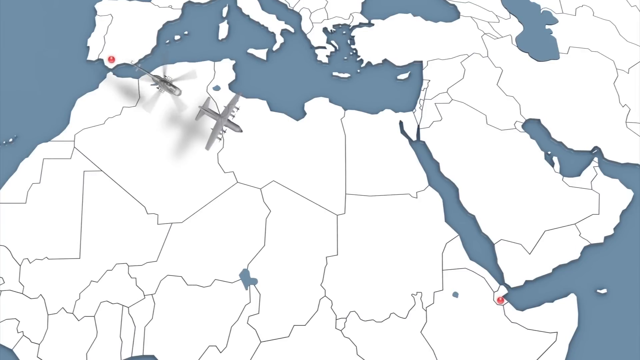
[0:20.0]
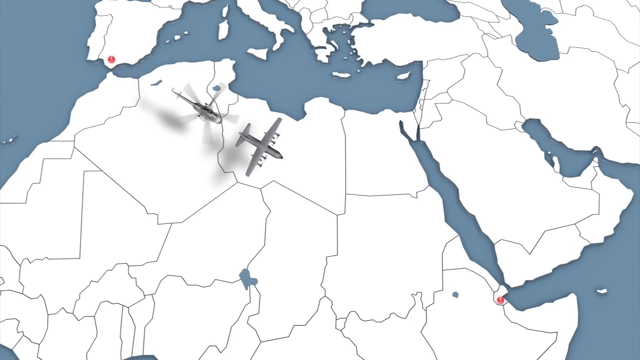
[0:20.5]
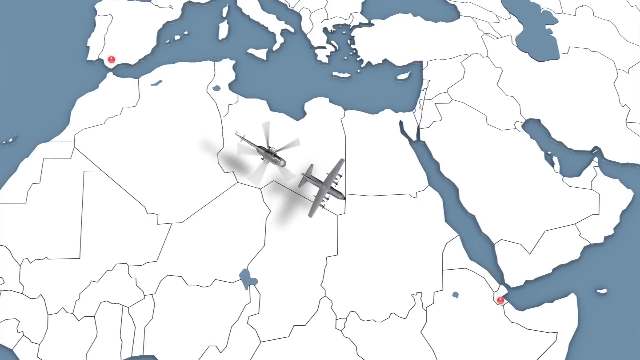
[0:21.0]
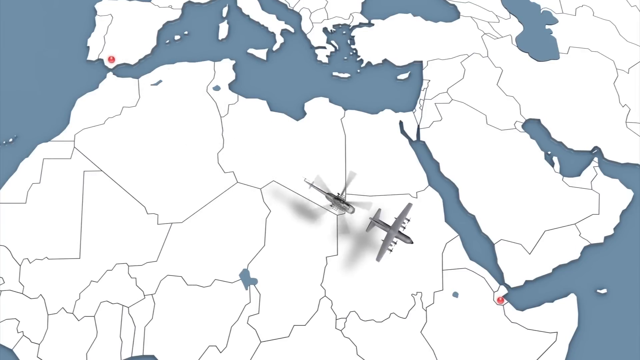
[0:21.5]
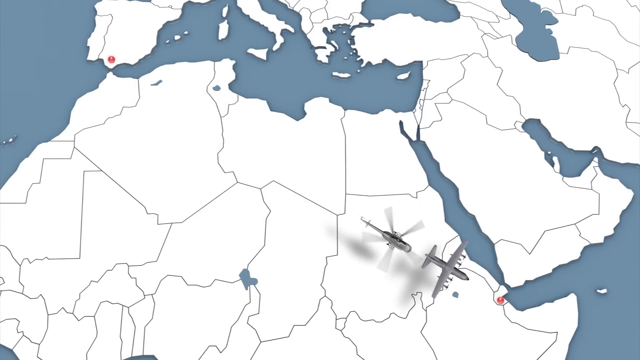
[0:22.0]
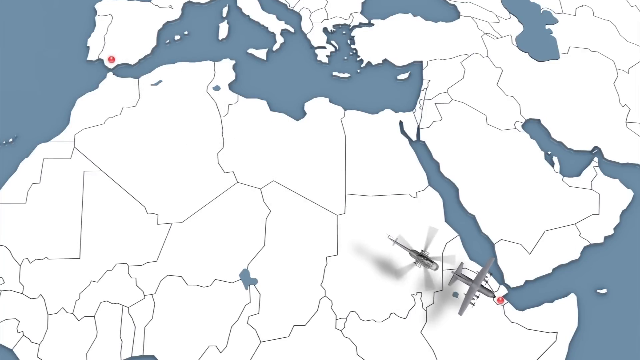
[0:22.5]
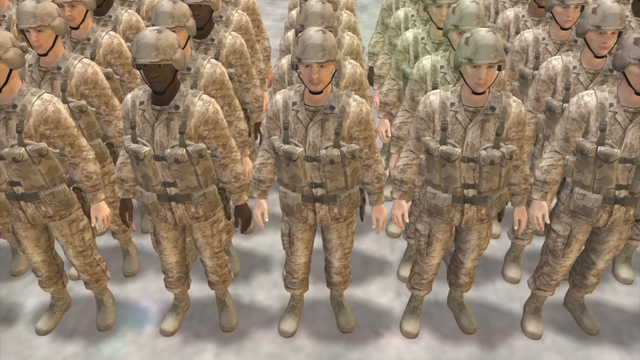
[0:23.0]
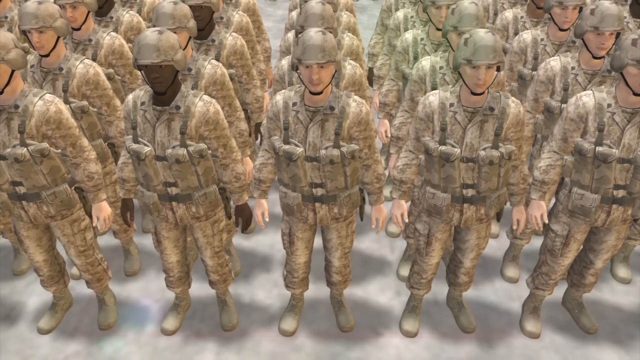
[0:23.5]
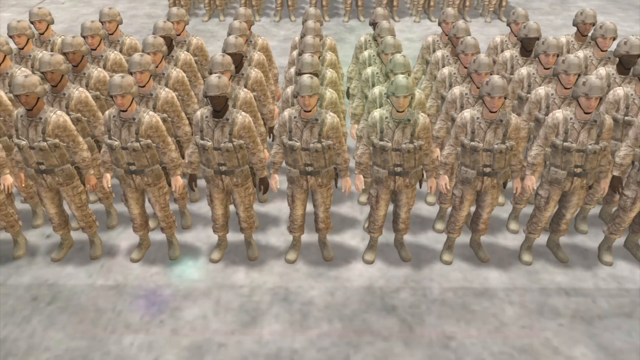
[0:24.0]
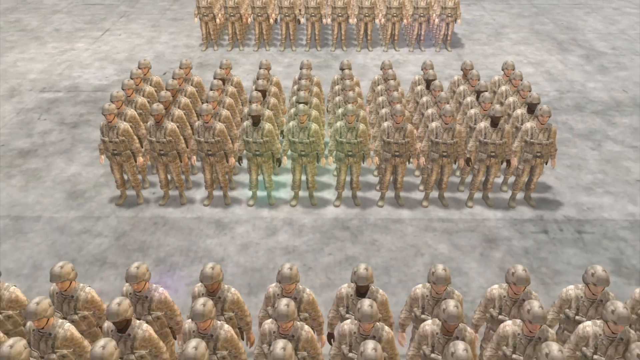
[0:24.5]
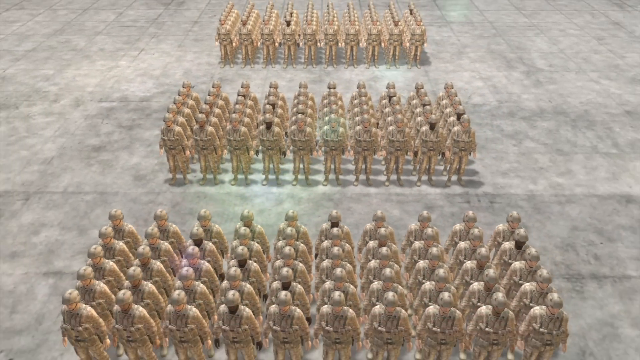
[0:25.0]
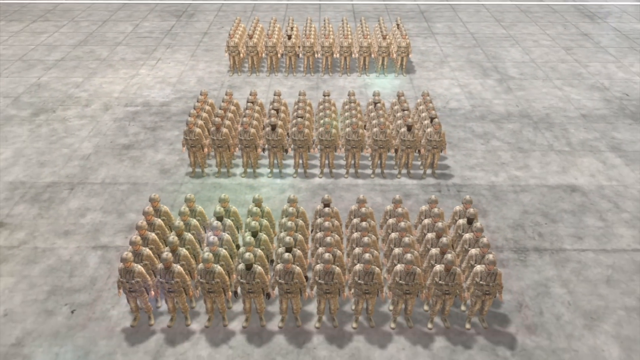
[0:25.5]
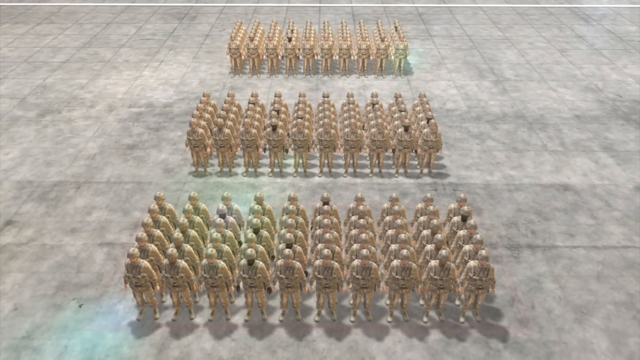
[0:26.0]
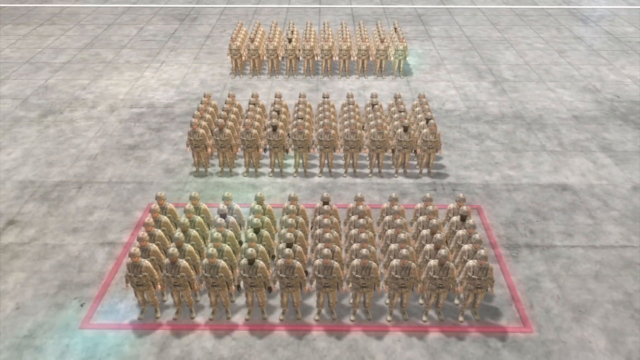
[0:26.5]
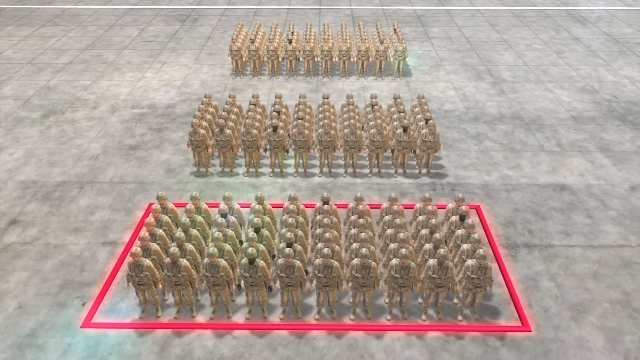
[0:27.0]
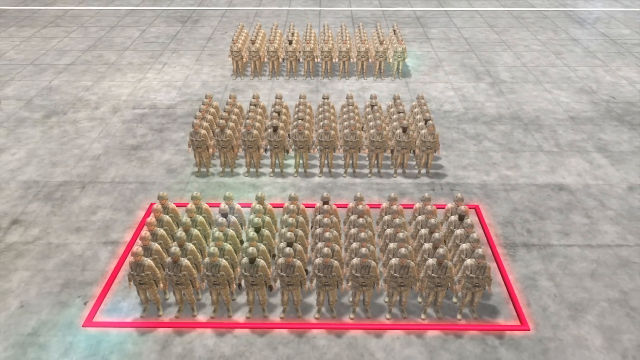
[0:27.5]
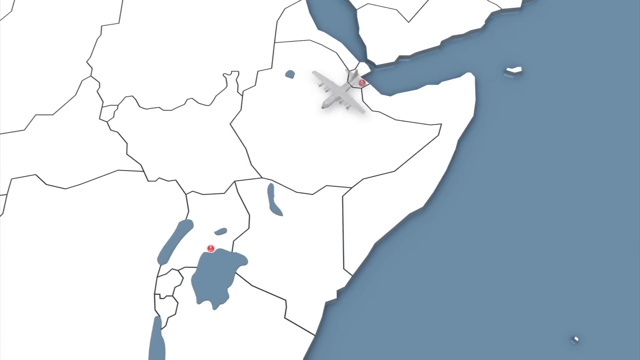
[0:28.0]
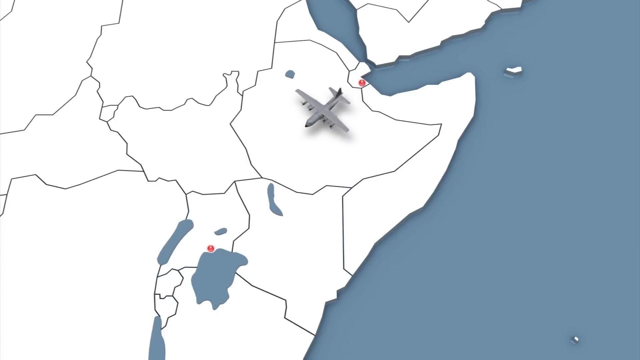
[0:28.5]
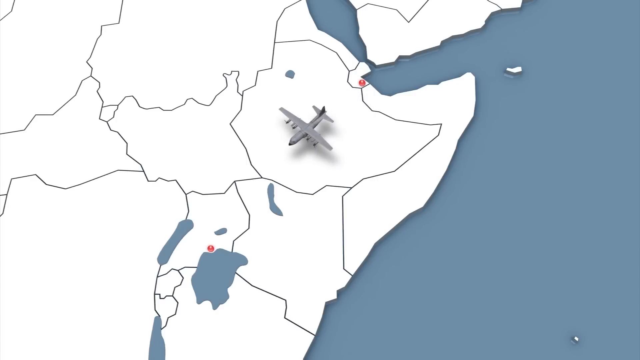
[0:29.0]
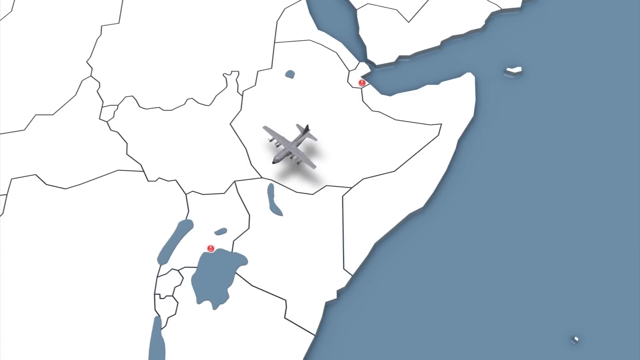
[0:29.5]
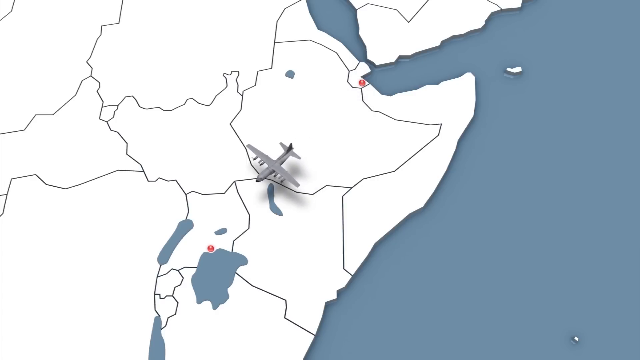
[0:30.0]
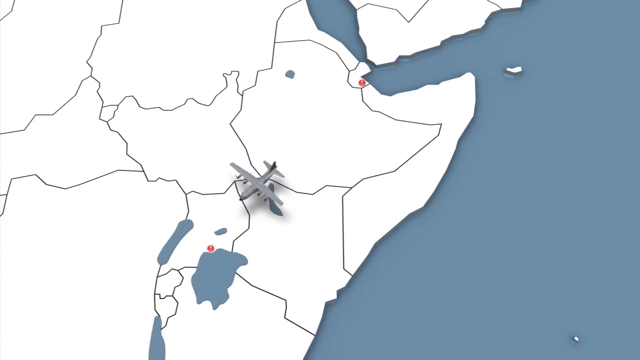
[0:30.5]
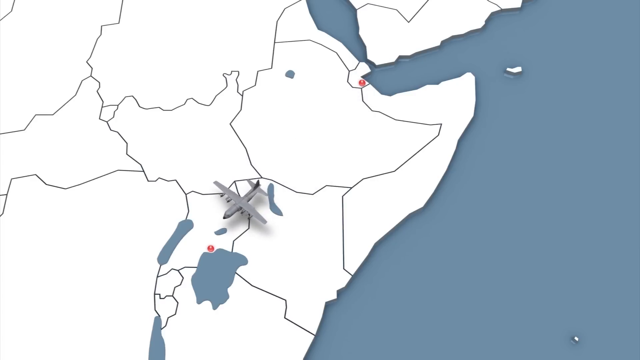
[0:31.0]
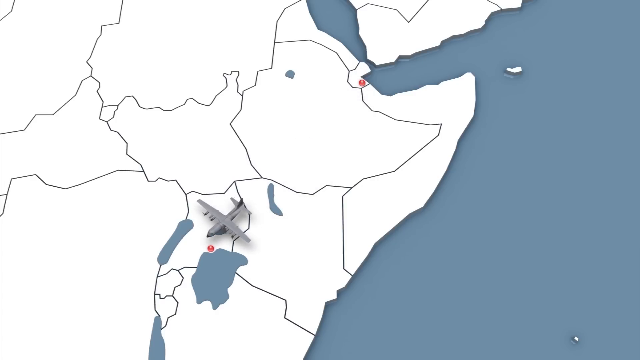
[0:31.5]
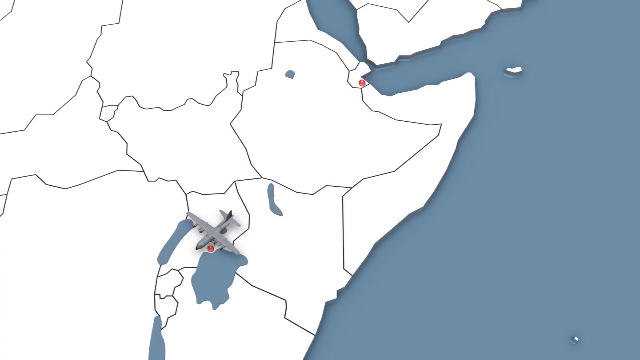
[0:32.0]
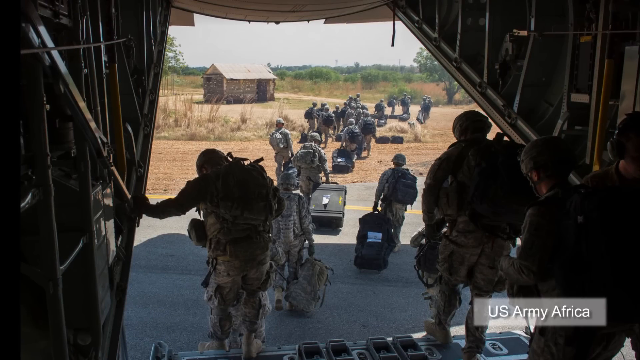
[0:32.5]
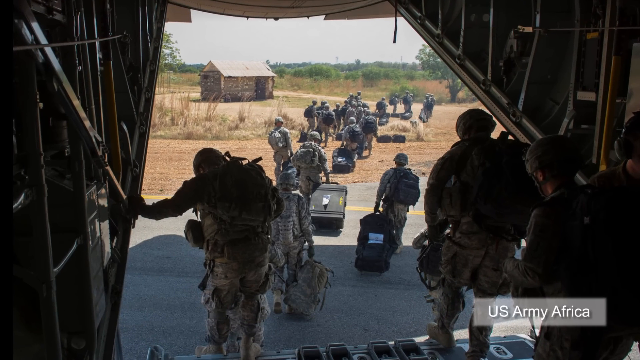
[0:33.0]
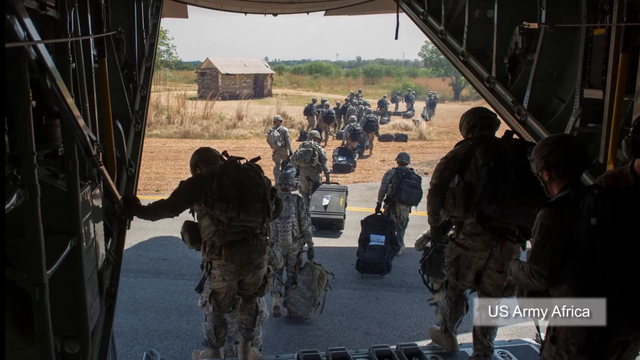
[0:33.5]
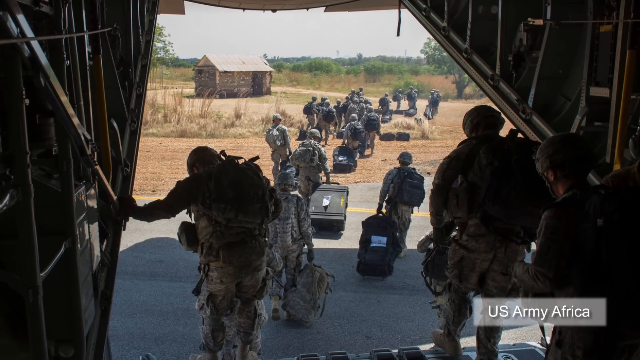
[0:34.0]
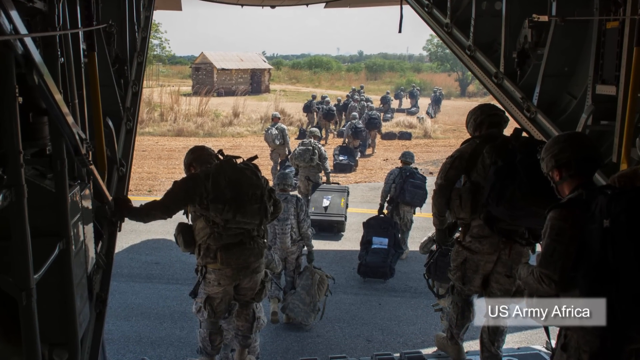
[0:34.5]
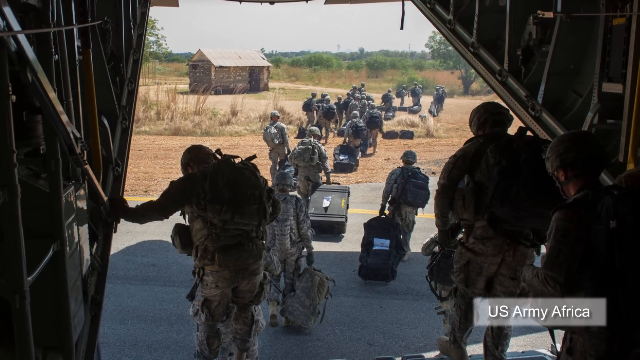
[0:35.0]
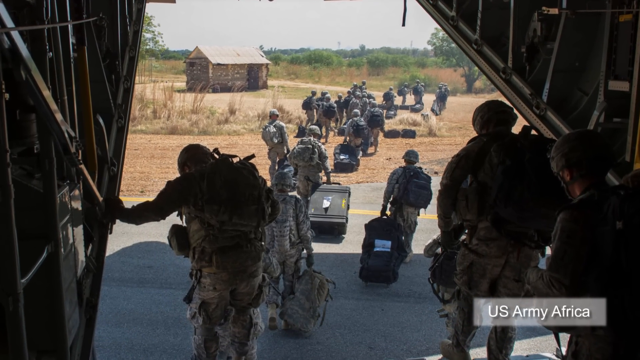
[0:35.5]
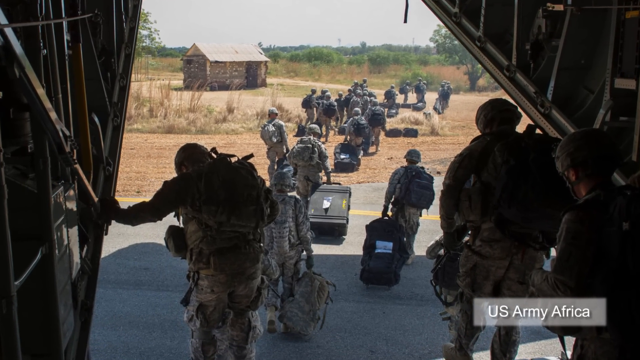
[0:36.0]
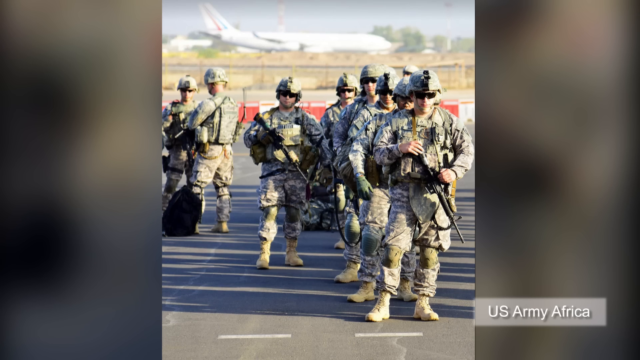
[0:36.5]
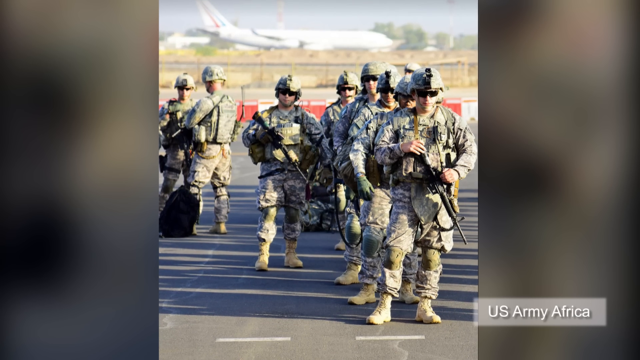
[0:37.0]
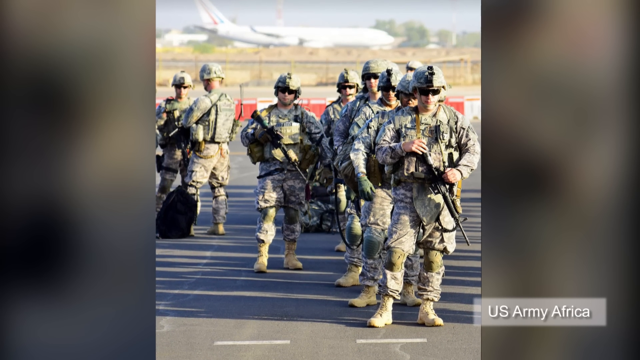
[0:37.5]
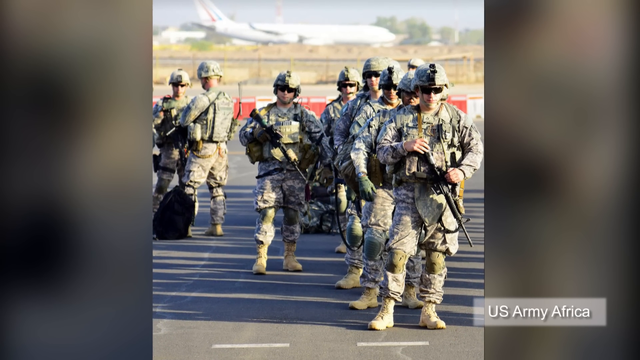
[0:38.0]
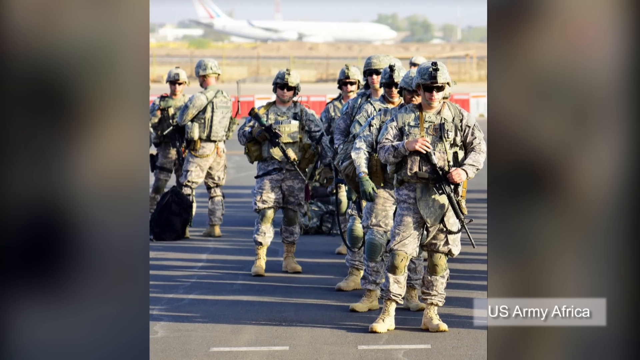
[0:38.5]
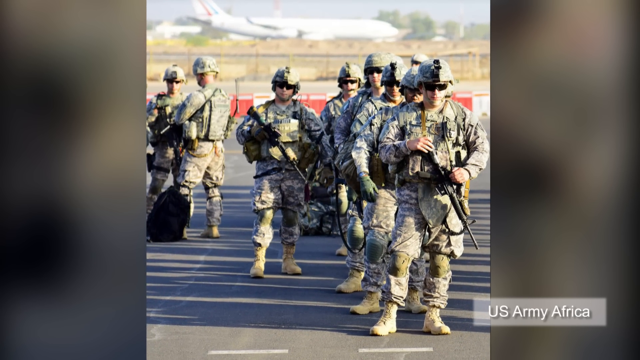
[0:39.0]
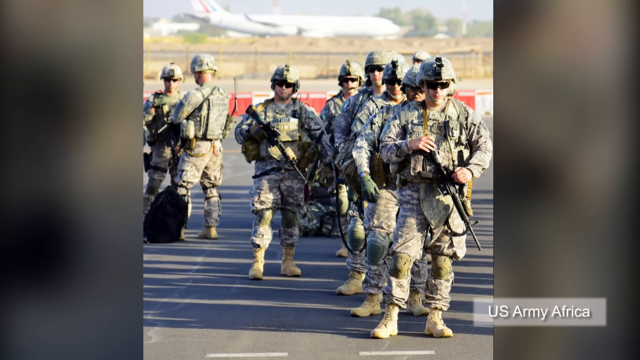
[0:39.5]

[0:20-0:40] A close-up map of the world shows airplanes flying from one place to a place in Africa. A large group of soldiers is lined up in order in three sections, and a red rectangle goes around the first group. The map shows them flying from somewhere in Africa to another place in Africa. They get out with their luggage and walk across sand, with soldiers carrying guns and an airplane in the distance. The map route goes to somewhere in Africa and then somewhere else in Africa, which looks like a couple of stops. A helicopter flies behind the airplane, followed by the soldiers.